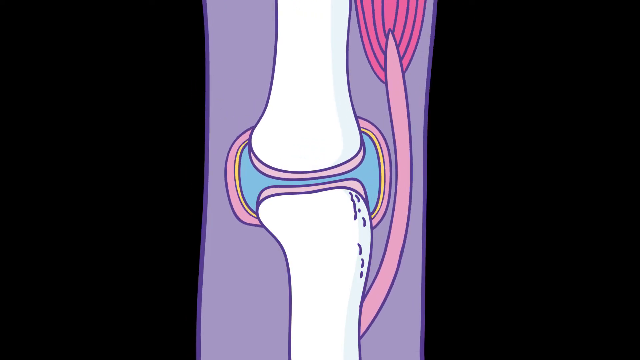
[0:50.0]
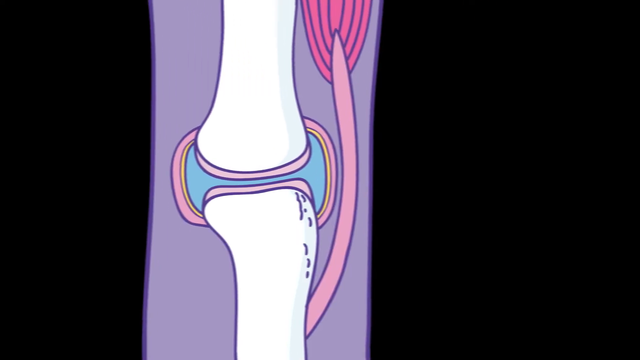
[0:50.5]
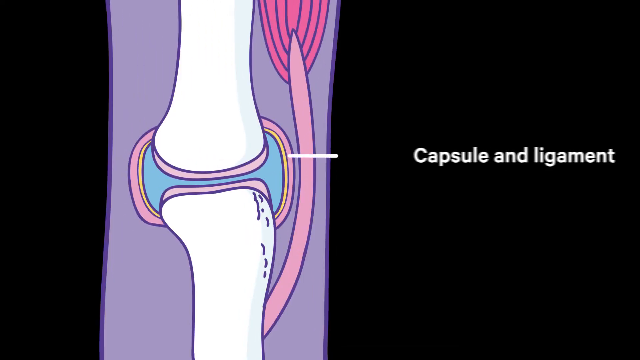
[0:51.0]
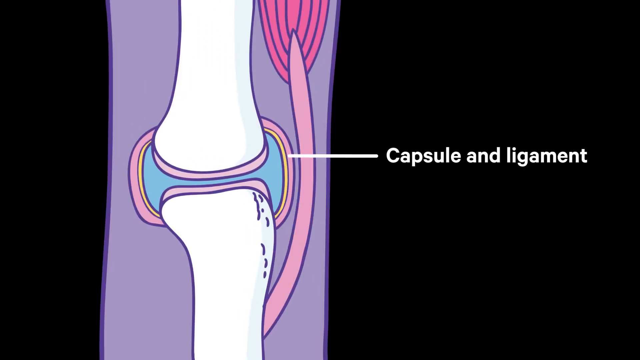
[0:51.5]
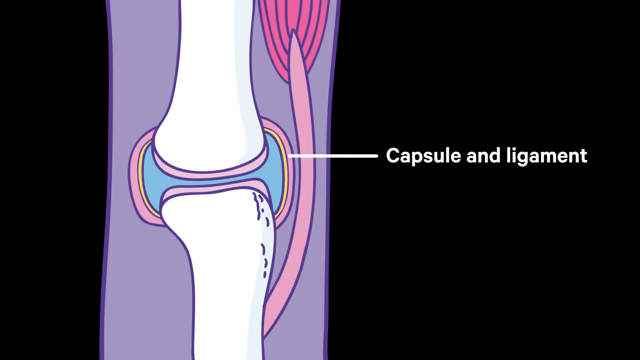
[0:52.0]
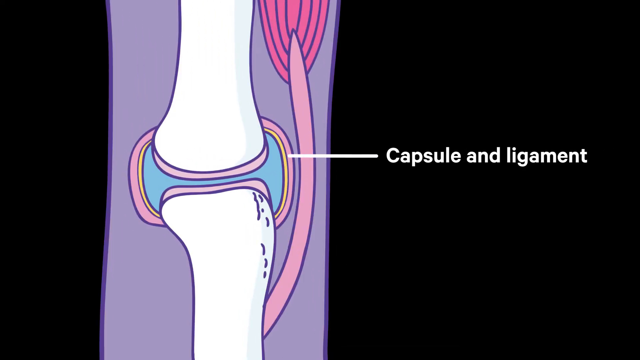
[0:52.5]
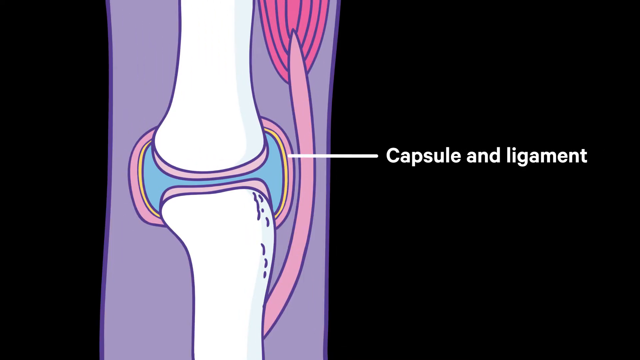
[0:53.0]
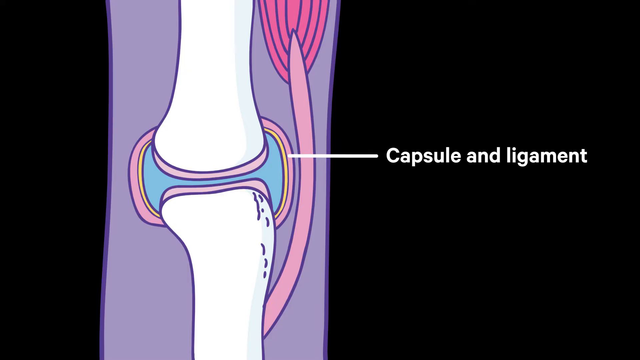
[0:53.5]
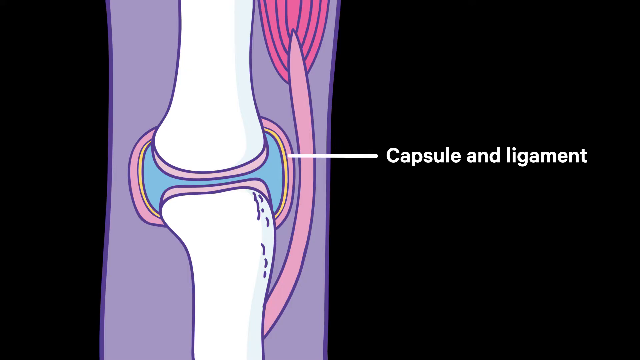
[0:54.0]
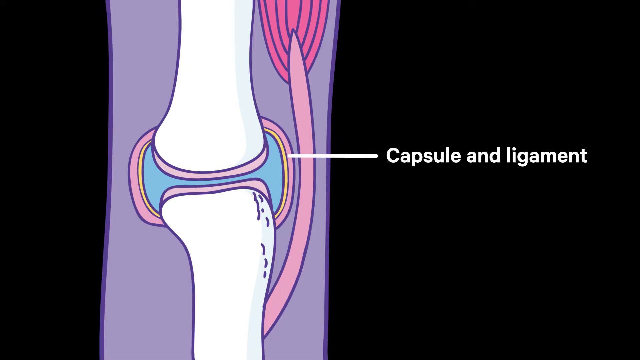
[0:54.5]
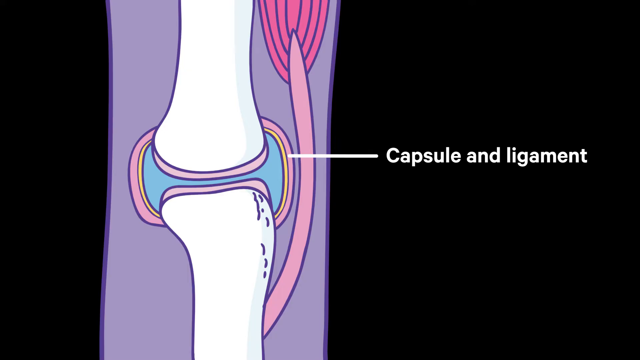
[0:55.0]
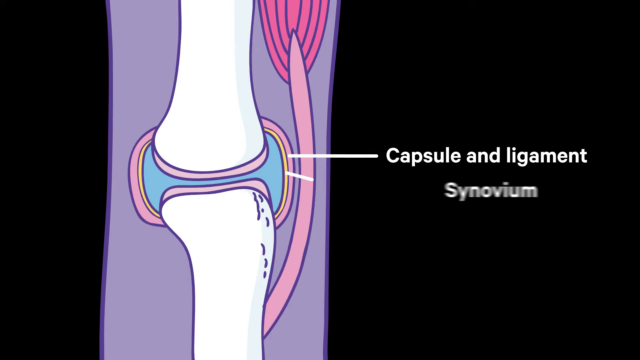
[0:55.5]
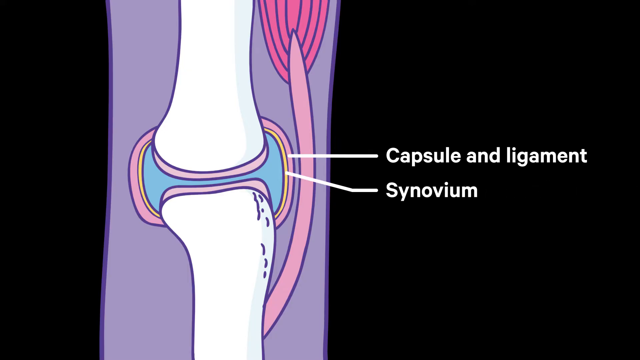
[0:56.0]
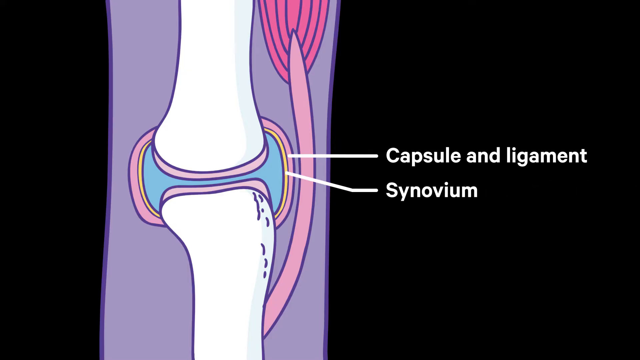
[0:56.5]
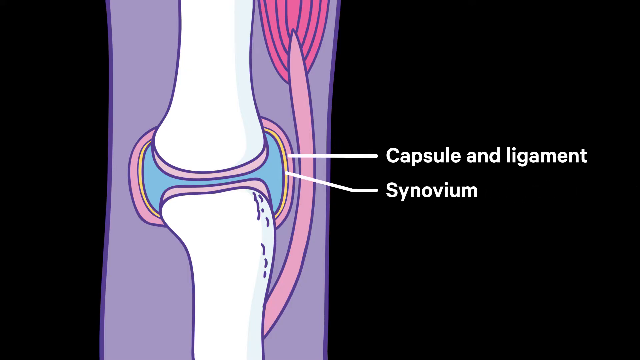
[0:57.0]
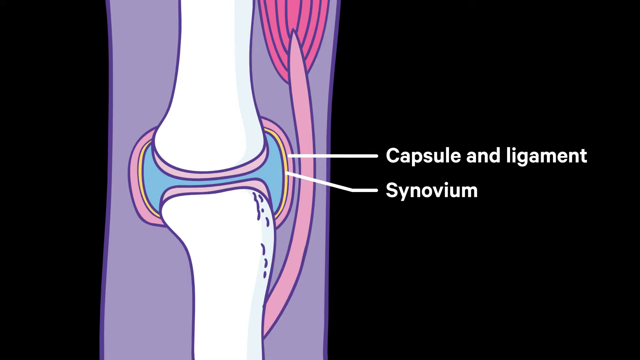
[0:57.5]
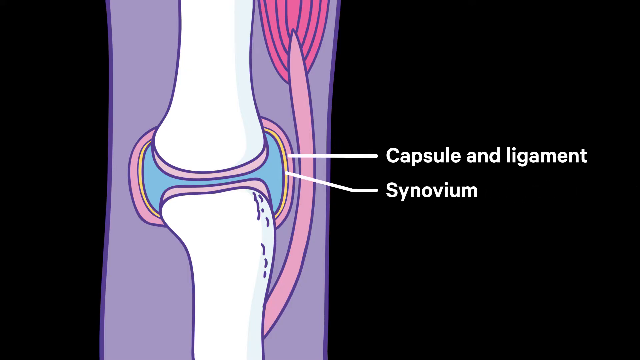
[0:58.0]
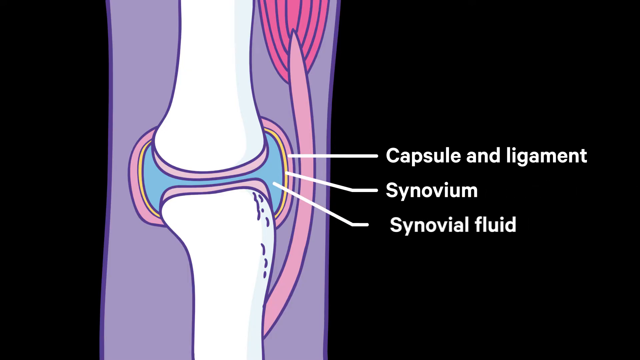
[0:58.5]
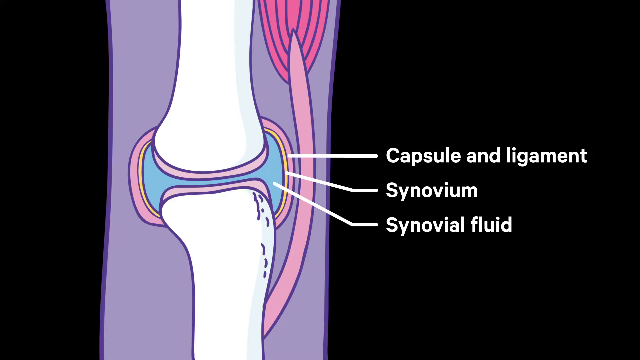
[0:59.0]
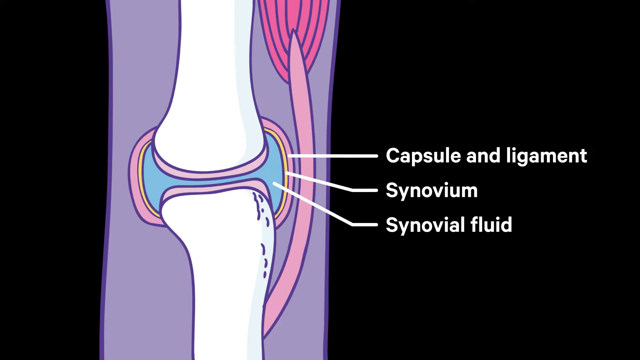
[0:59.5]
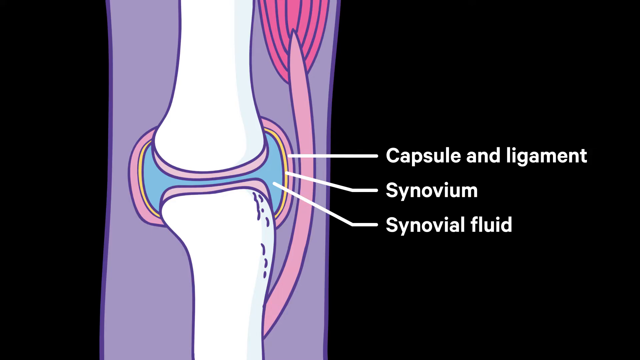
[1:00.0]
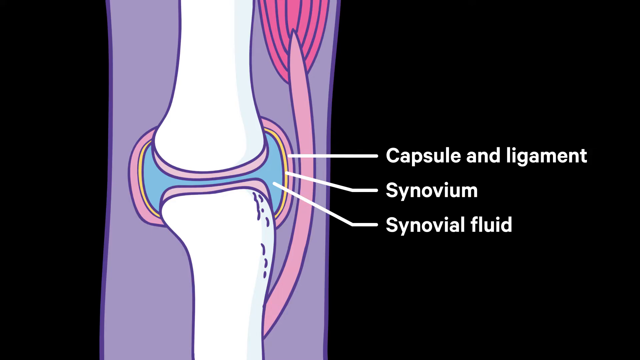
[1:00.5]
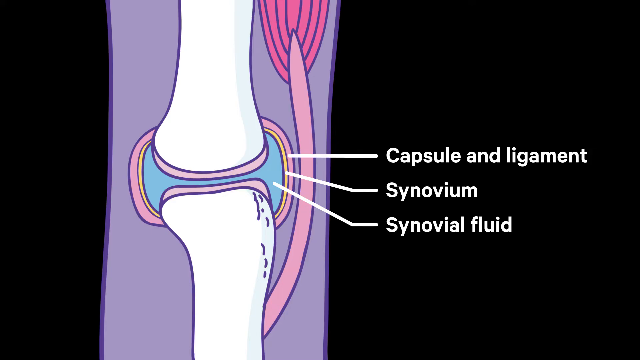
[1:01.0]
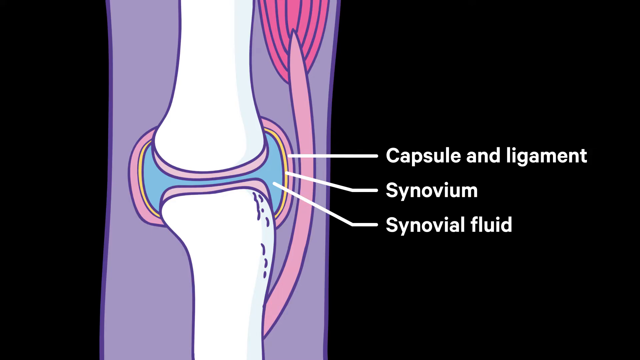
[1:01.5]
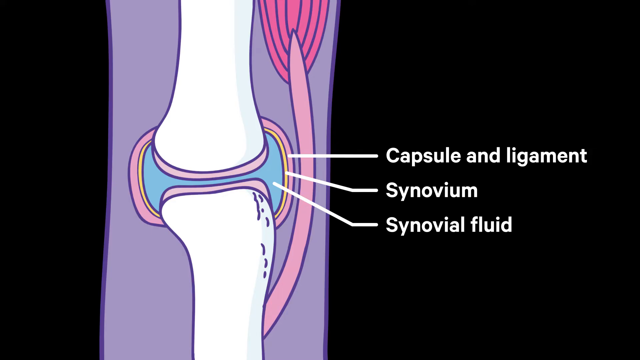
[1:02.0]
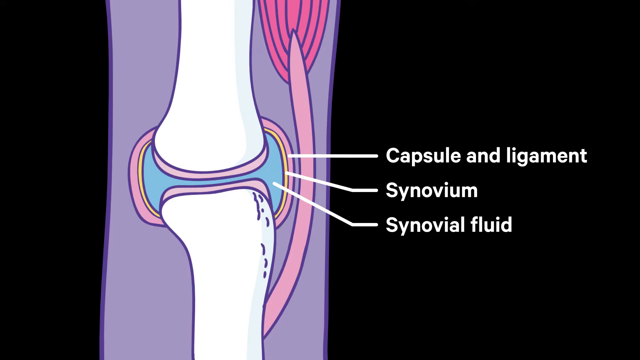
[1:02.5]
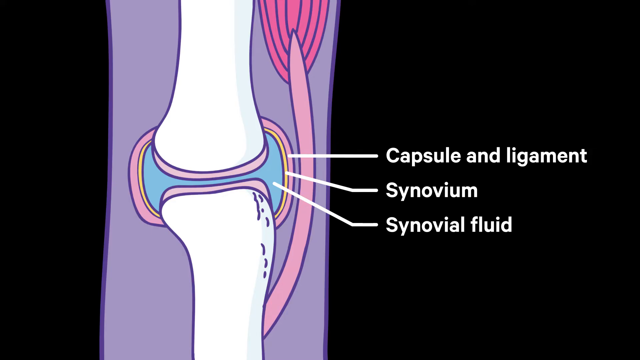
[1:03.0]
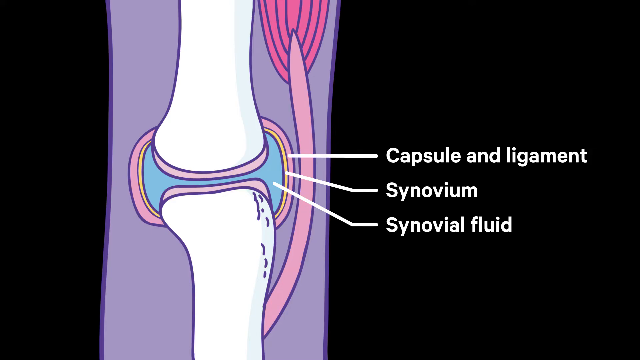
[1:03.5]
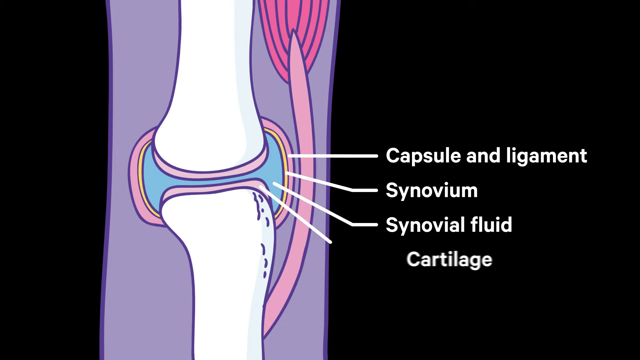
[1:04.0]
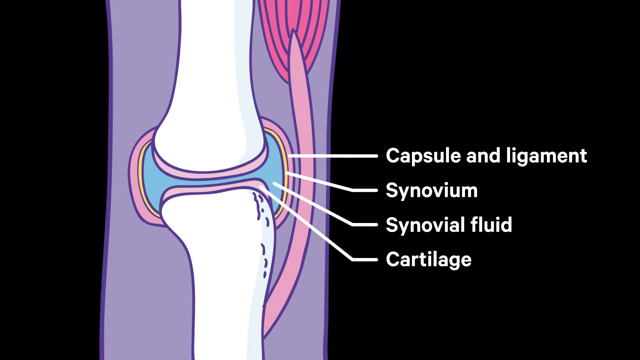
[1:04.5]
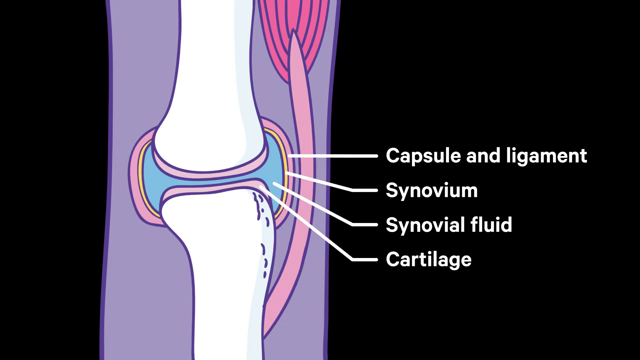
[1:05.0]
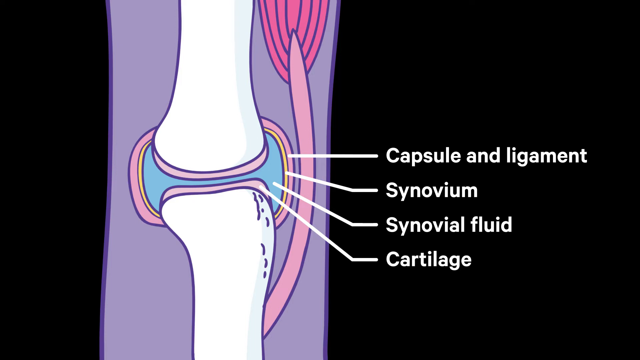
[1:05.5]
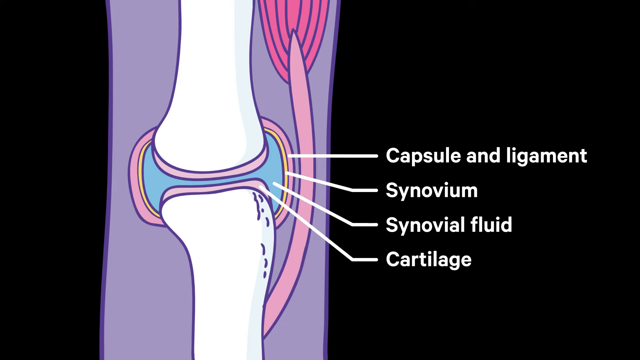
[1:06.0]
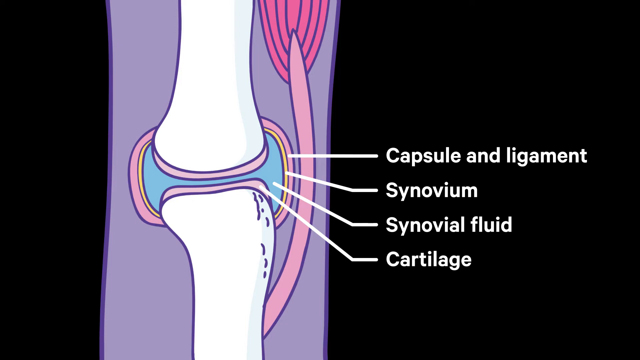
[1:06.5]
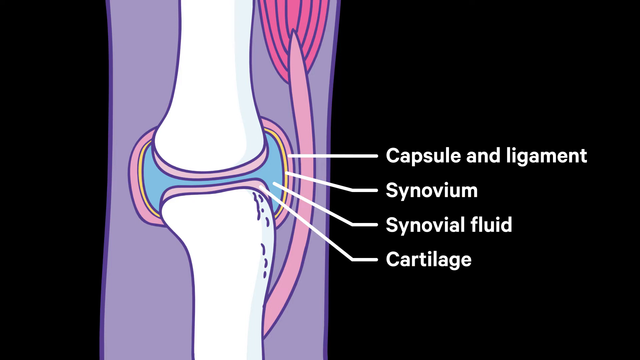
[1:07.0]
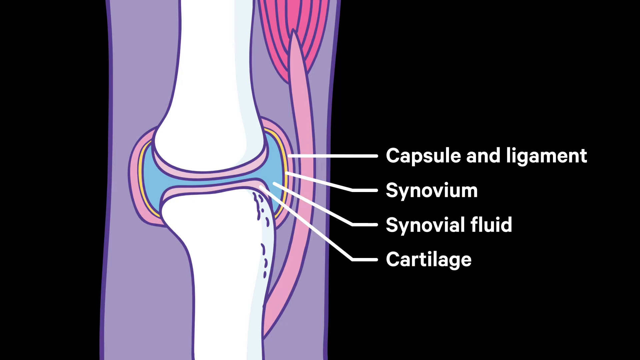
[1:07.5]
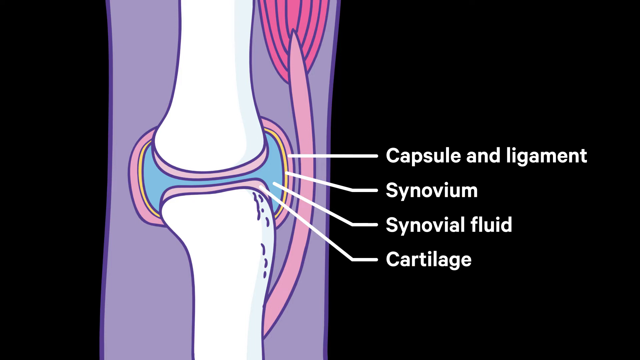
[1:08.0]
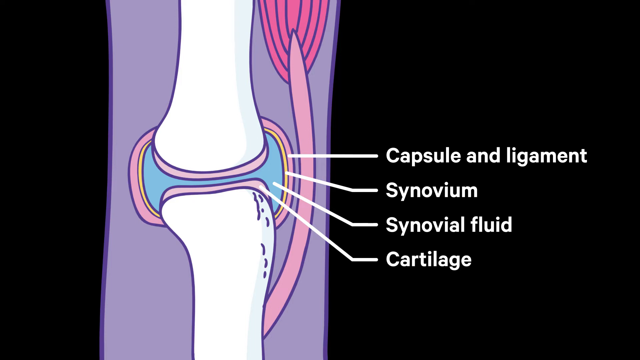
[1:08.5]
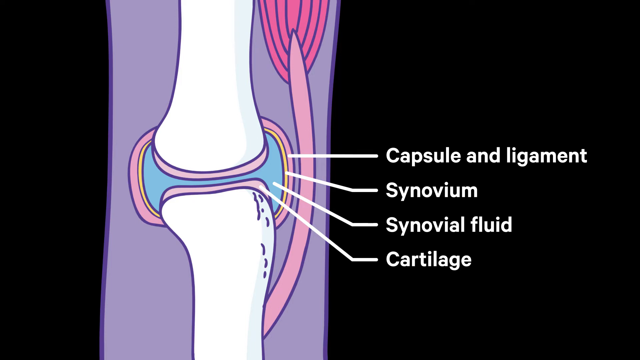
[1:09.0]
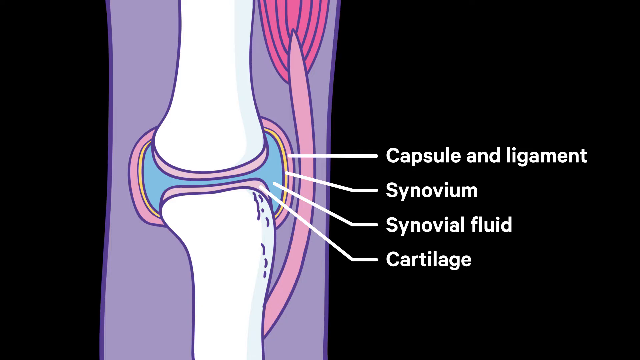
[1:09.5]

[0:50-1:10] A close-up cartoon animation shows what looks like a knee joint against a black background. The knee is in purple and blue, the bones are white, and the tendons are a pink, peach-pink color. Arrows point to different parts of the knee joint, which focuses on the capsule, ligament, synovium, synovial fluid and cartilage. Blue areas represent the fluid, and a purplish color is apparently meant to be the skin around the bone or muscle.